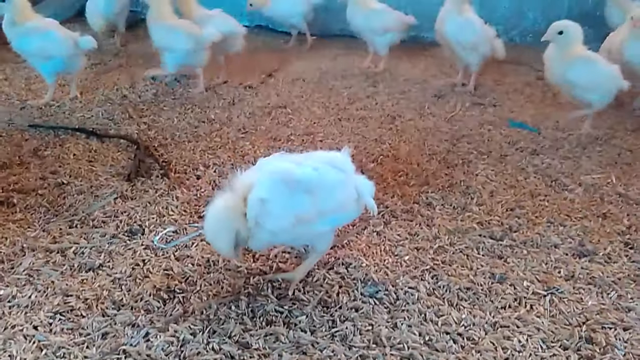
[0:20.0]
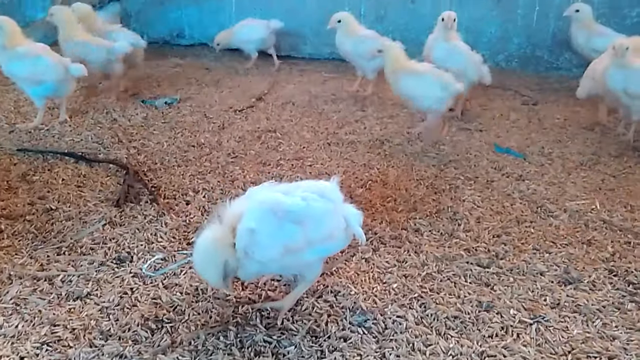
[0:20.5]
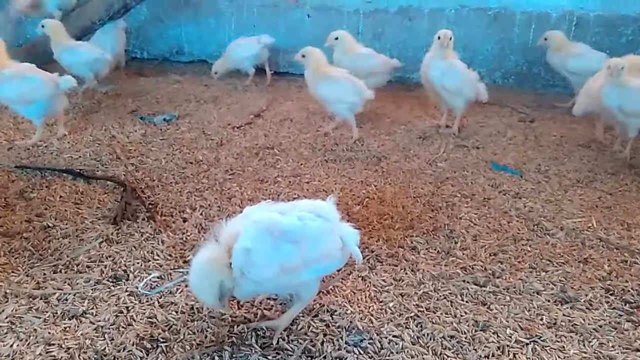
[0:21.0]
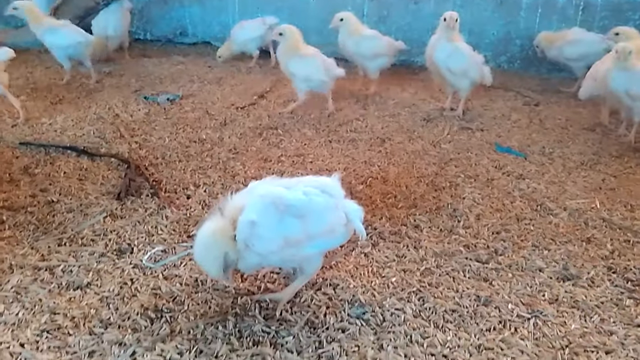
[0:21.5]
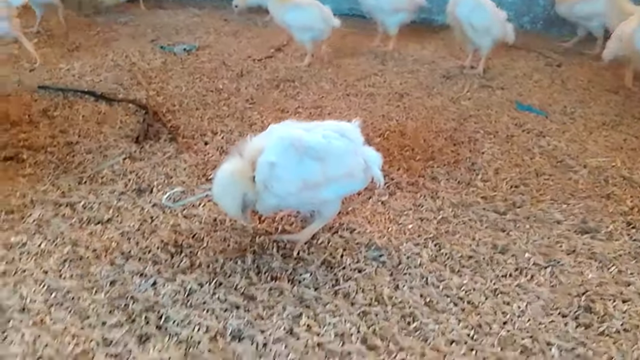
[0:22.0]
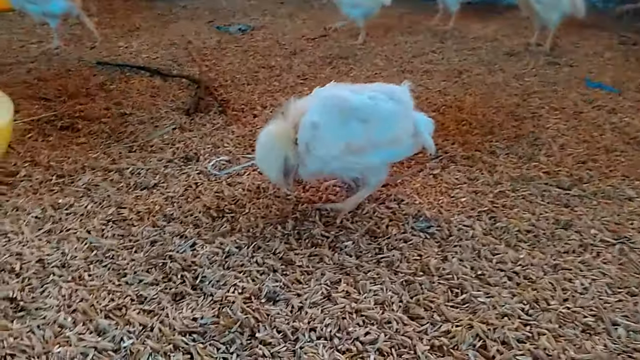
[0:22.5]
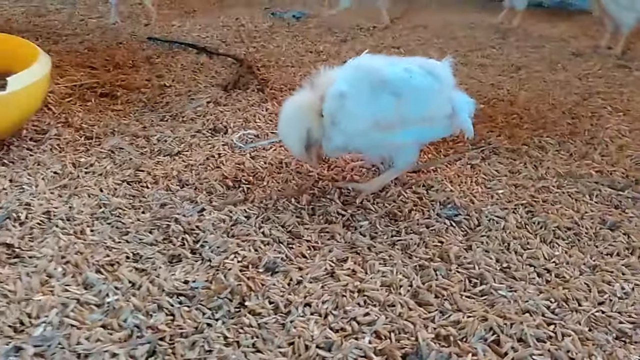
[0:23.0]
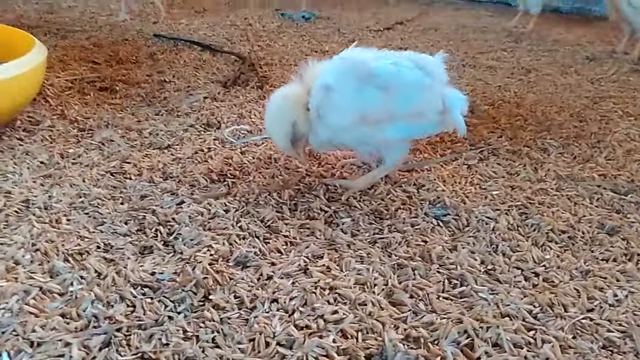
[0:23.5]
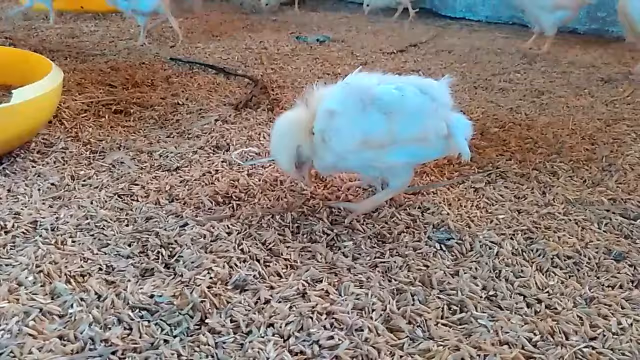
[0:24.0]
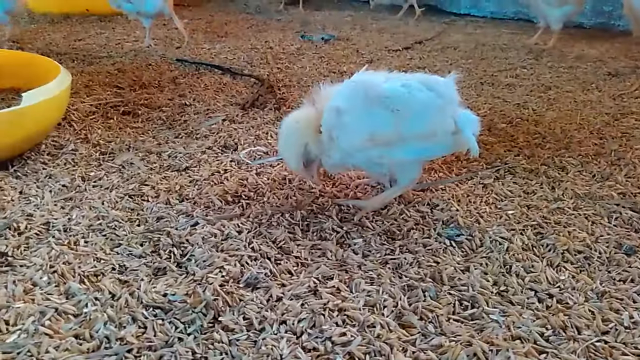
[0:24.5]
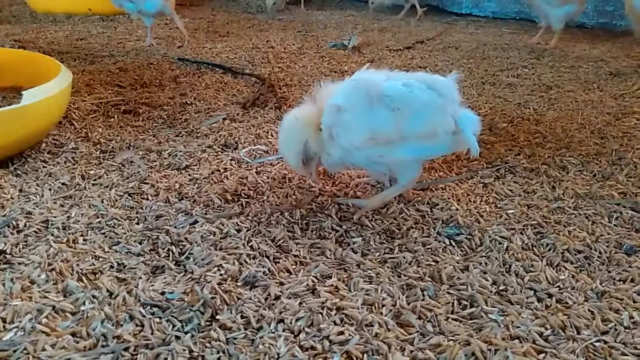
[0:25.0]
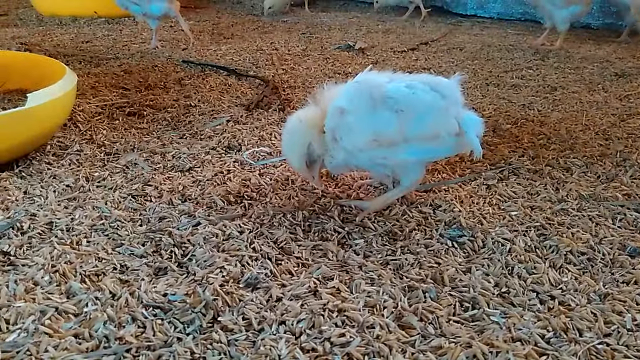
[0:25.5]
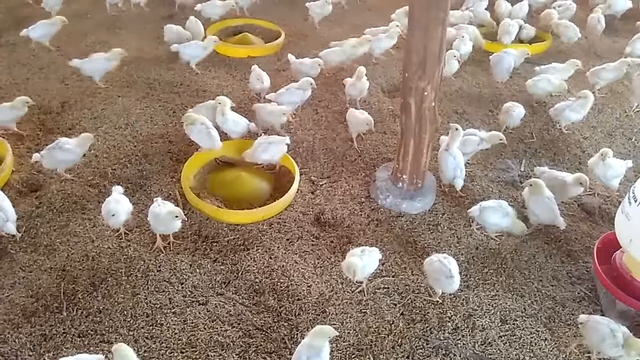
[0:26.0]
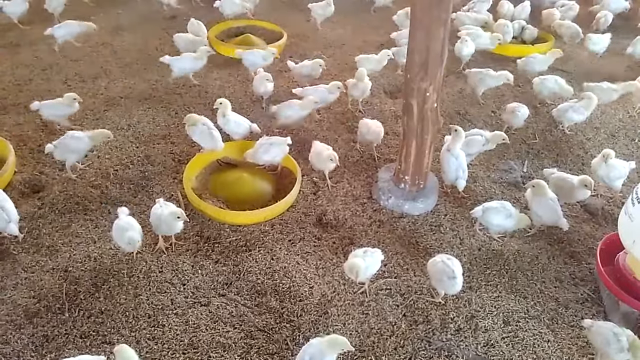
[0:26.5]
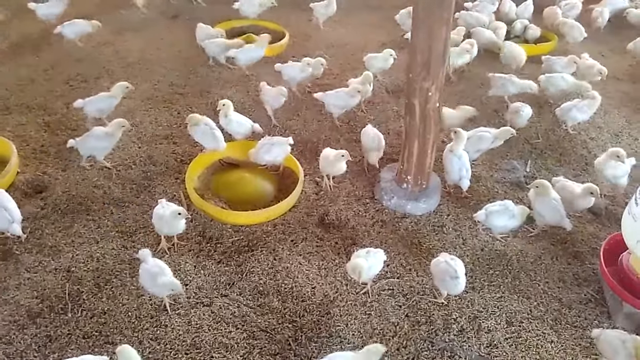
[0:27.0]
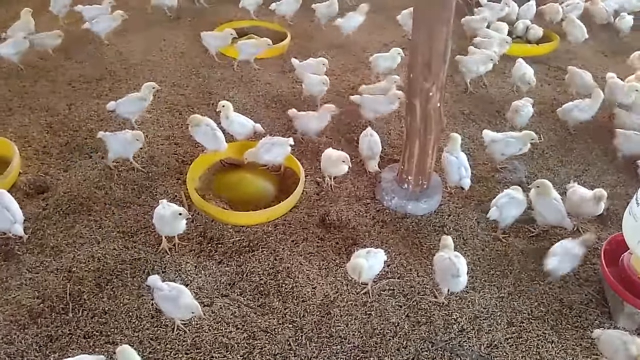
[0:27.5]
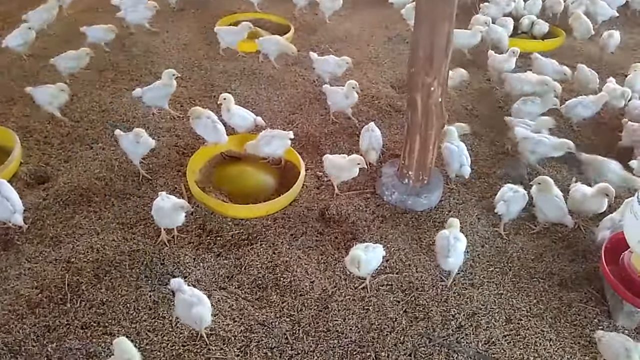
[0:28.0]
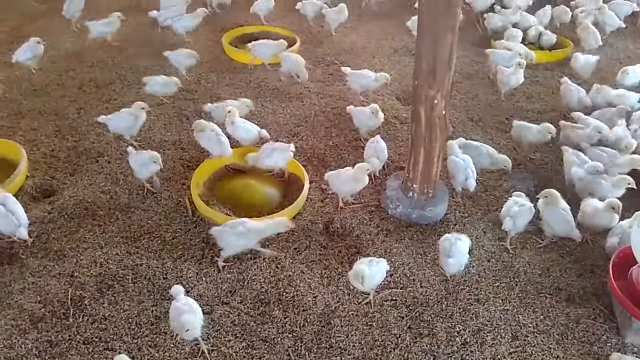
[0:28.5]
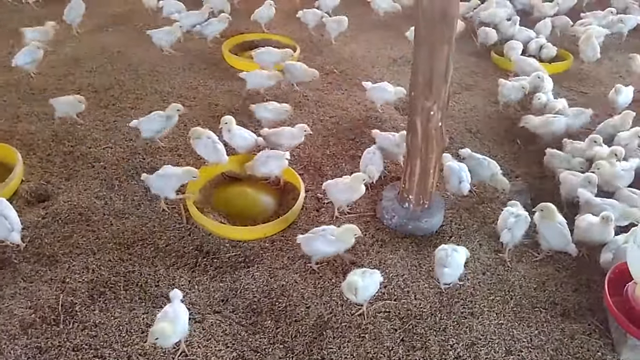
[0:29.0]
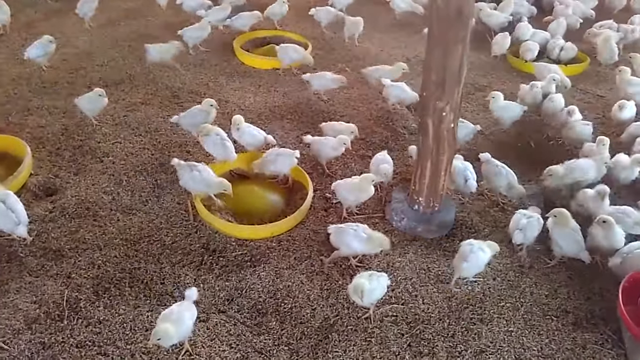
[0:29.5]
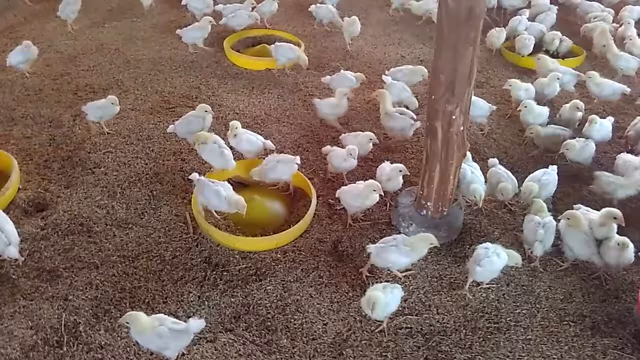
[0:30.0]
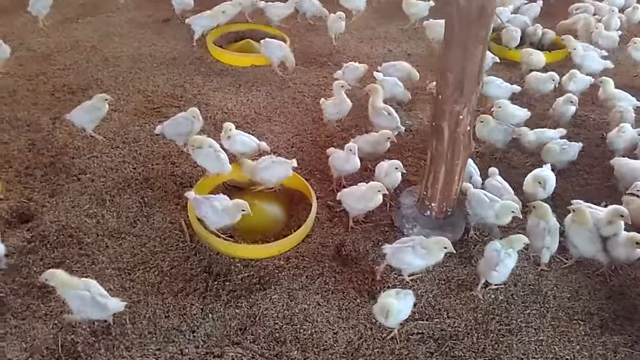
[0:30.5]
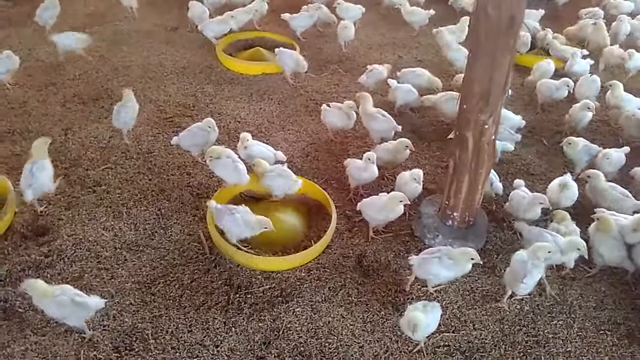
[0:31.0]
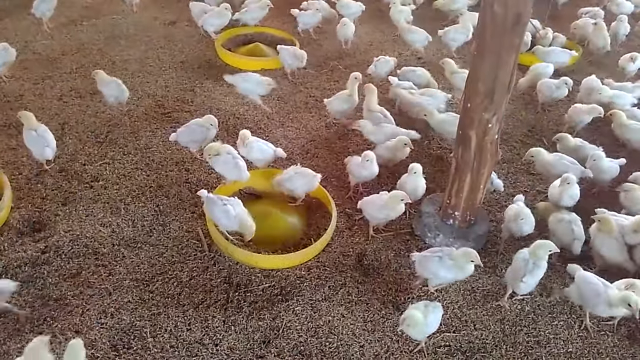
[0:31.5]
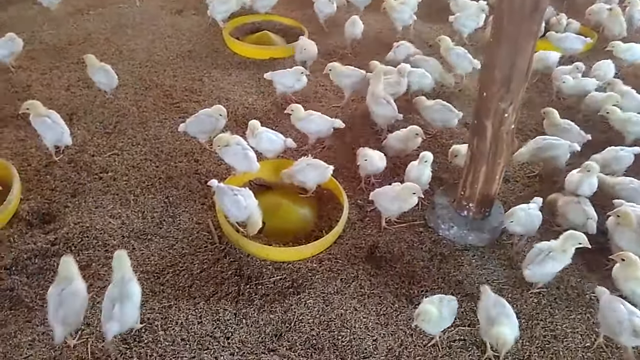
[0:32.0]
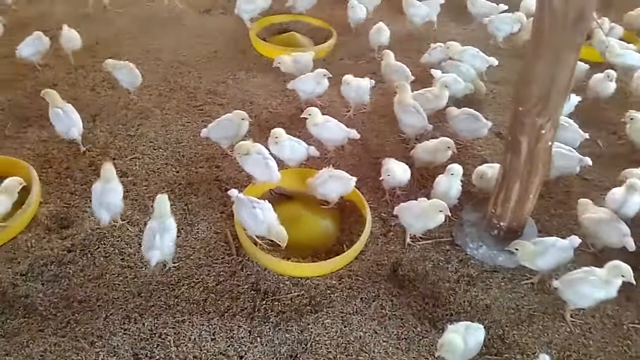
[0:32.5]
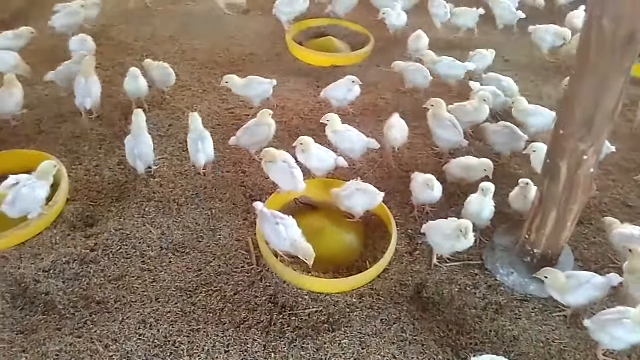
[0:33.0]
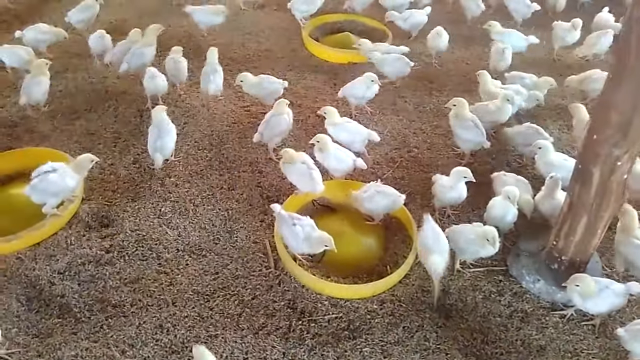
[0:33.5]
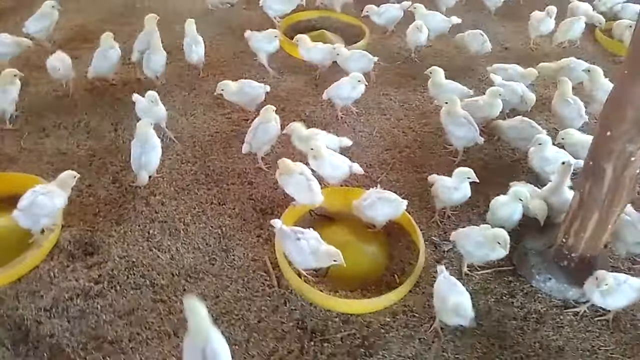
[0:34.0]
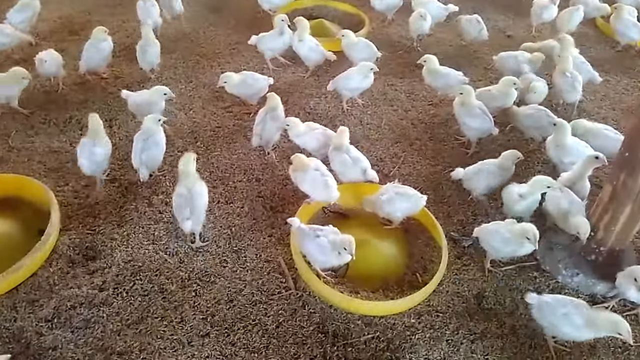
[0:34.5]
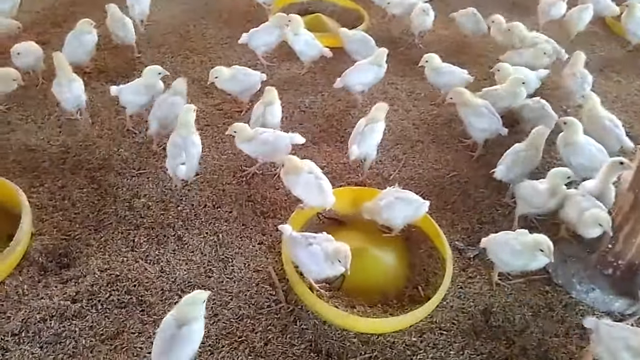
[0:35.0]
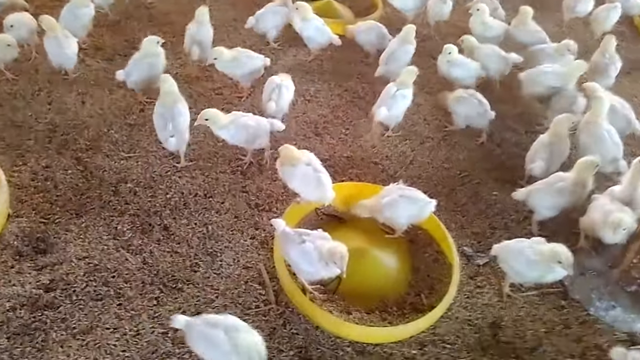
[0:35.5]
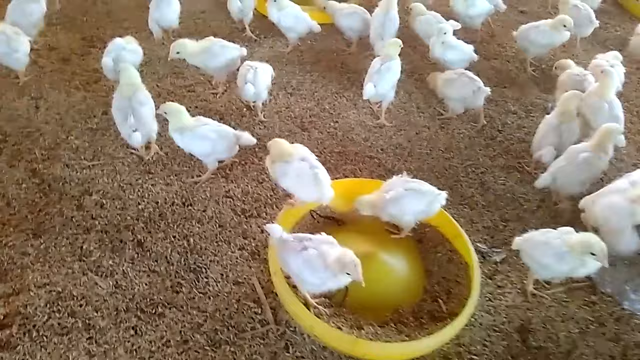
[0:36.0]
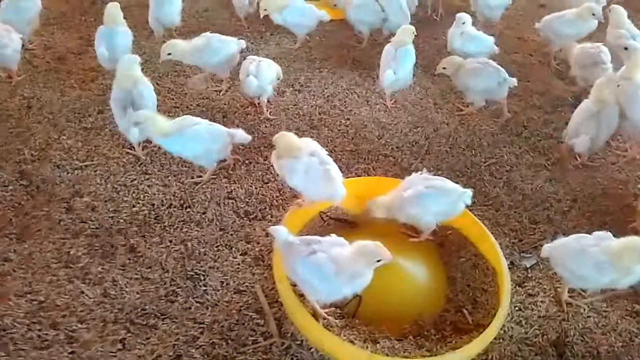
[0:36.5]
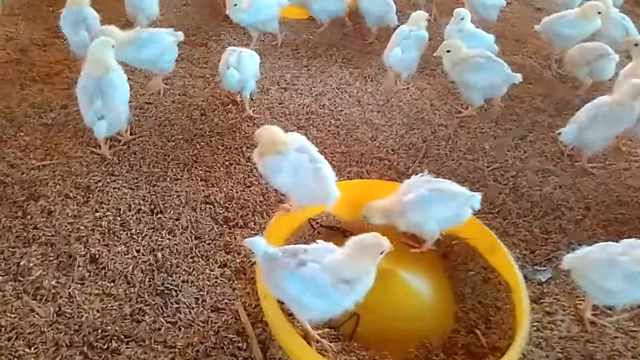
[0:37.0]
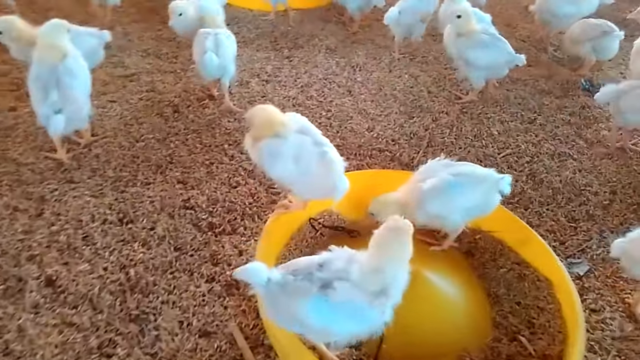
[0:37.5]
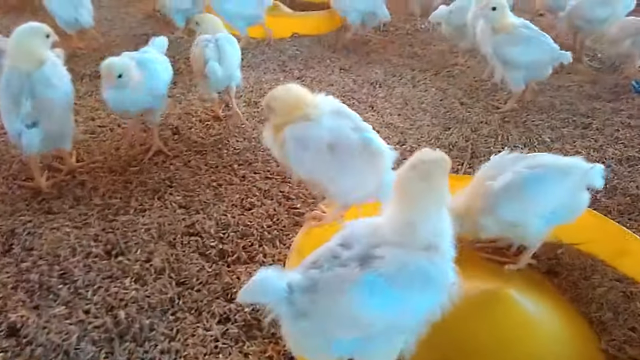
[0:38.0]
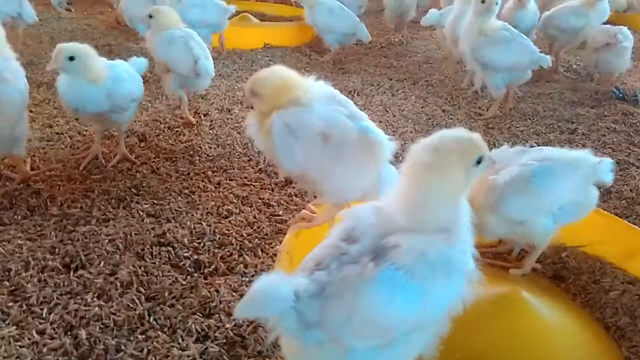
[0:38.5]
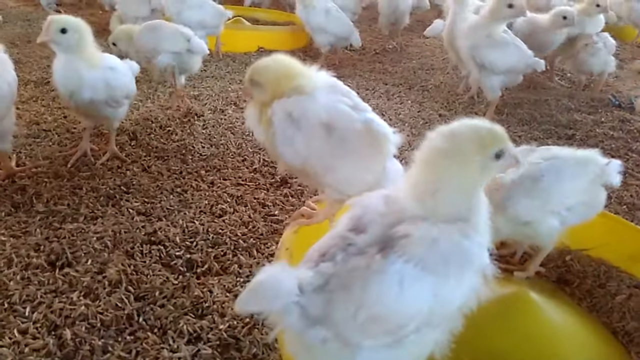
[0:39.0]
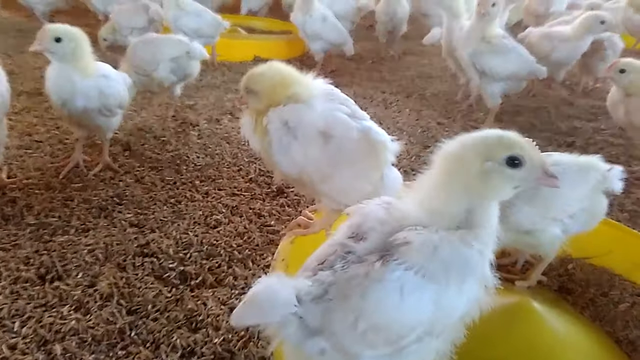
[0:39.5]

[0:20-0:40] The light has a slight blue tinge as the camera focuses on a small baby chick that, unlike the others, stands still and stares at the ground, as if it is possibly sleeping or cold. It barely moves. The scene then changes to a new overhead shot covering a broader area, revealing that the earlier feeding and drinking trays are not the only ones: there are at least four yellow feeding trays, and most of the chicks are going for the one in the top right of the scene rather than spreading out evenly. Whenever one chick makes a sudden movement, many others follow it. One chick runs from the top left to the middle, and all the chicks in the scene sort of converge toward the middle as the camera operator zooms in on a baby chick standing on one of the food trays.